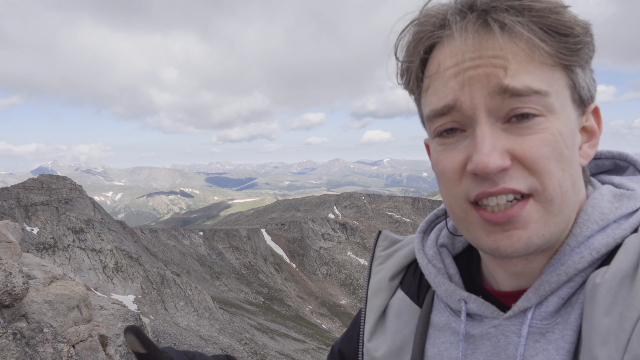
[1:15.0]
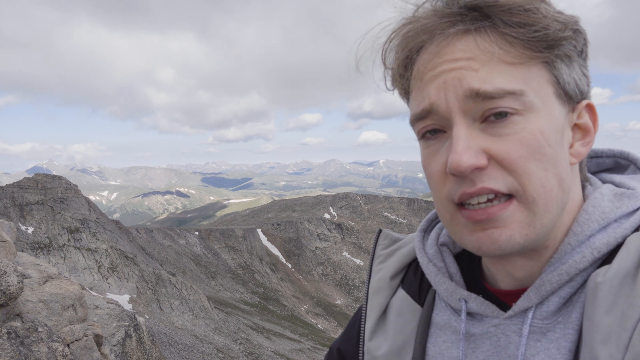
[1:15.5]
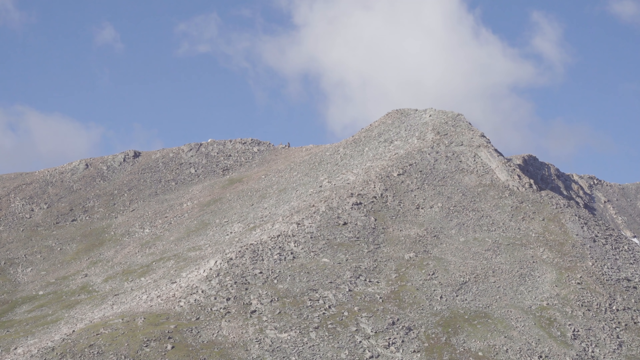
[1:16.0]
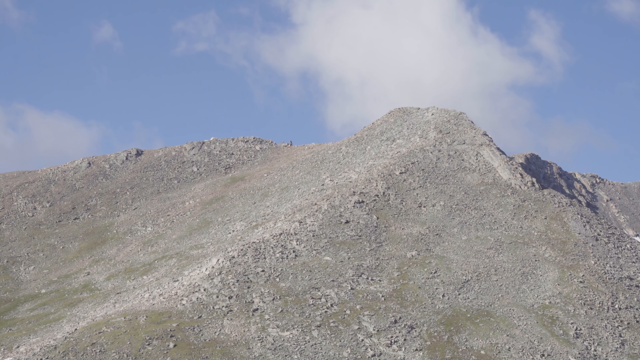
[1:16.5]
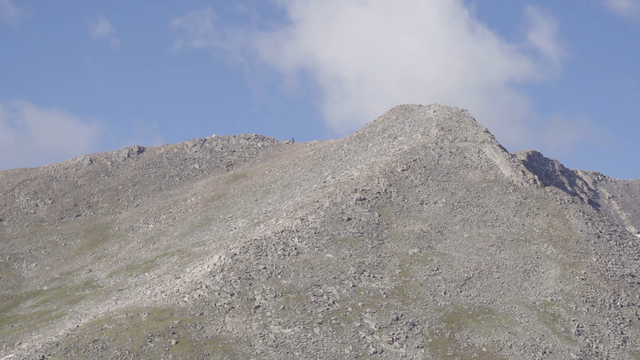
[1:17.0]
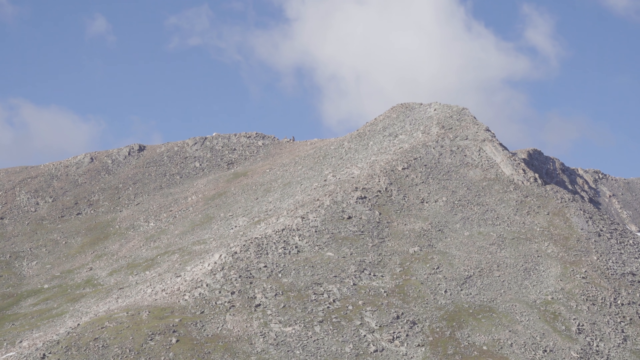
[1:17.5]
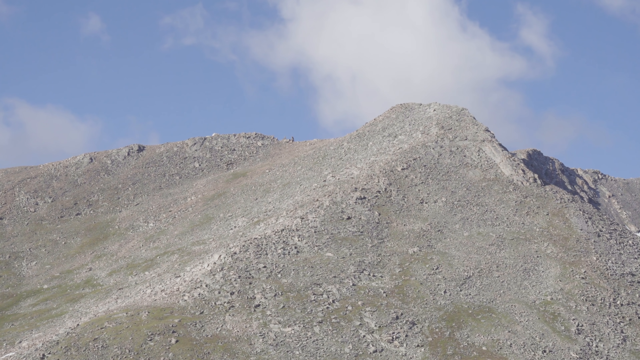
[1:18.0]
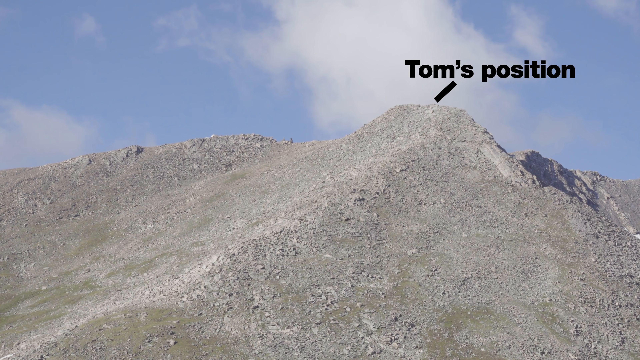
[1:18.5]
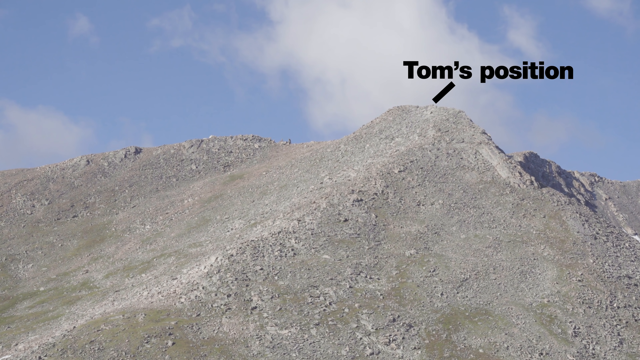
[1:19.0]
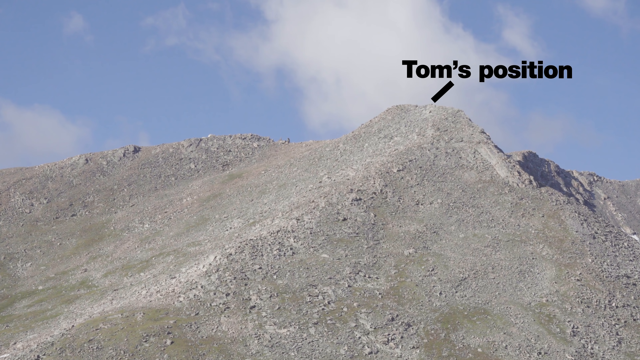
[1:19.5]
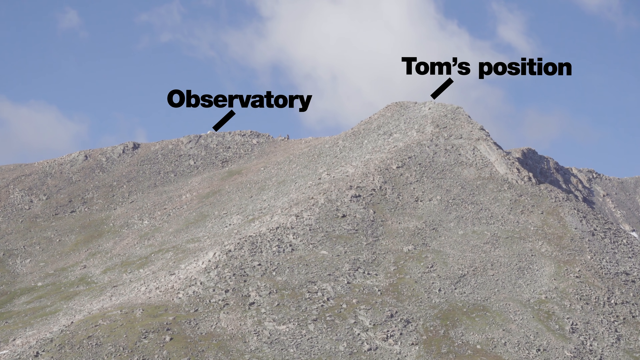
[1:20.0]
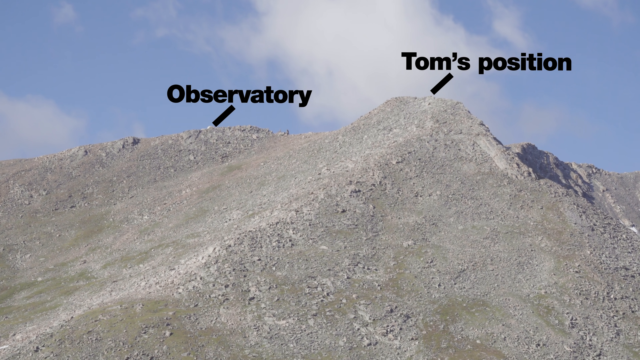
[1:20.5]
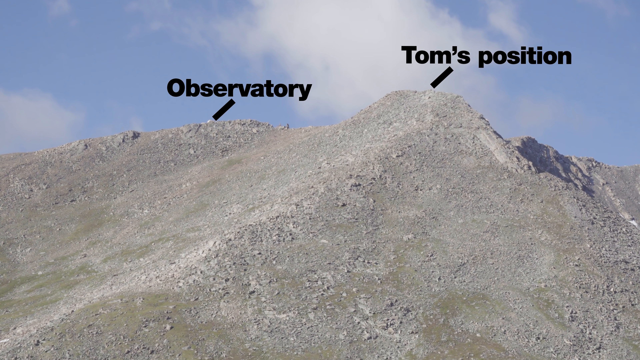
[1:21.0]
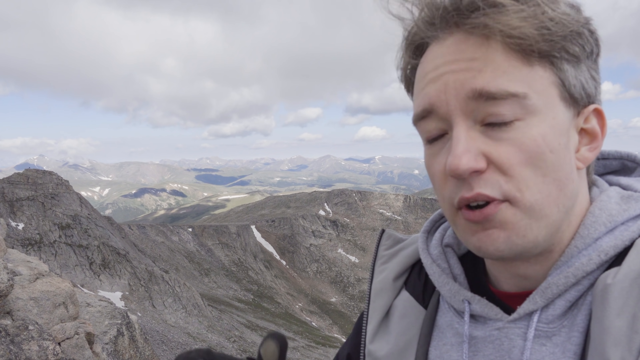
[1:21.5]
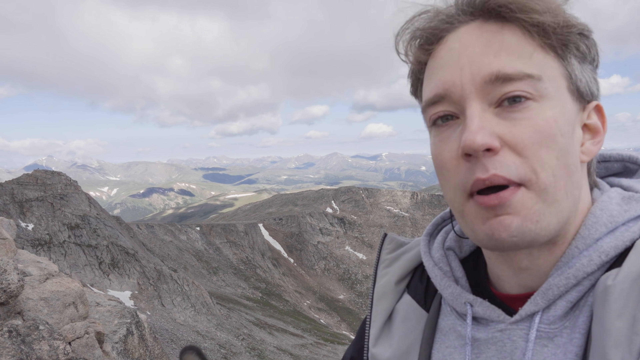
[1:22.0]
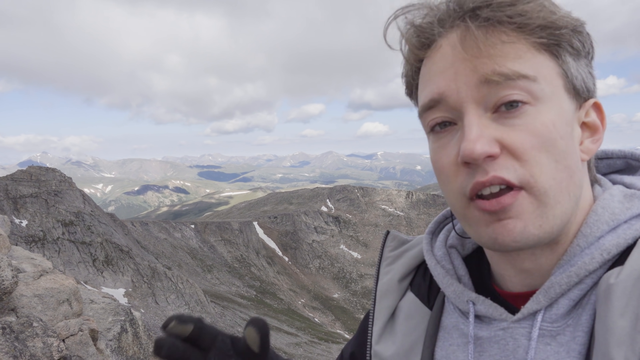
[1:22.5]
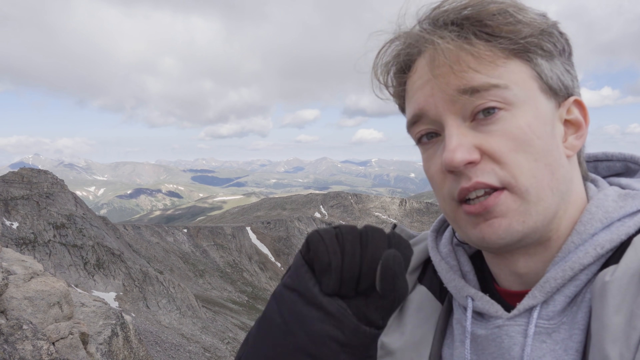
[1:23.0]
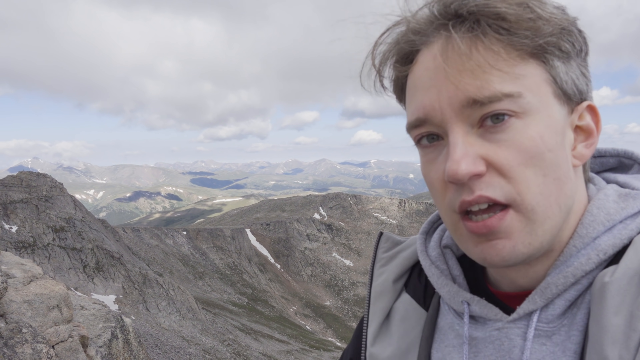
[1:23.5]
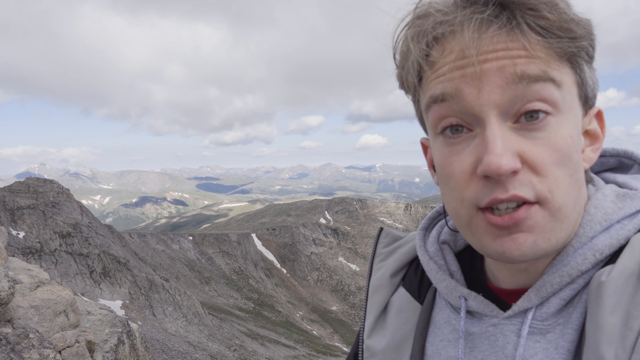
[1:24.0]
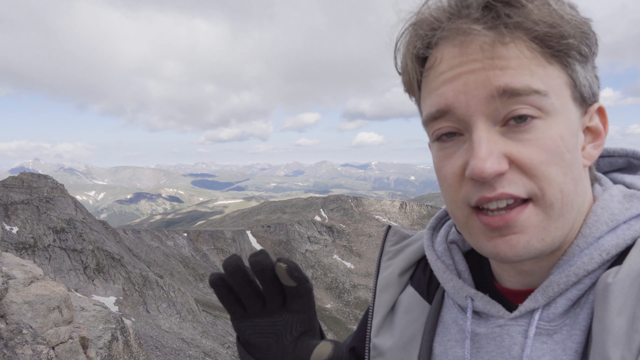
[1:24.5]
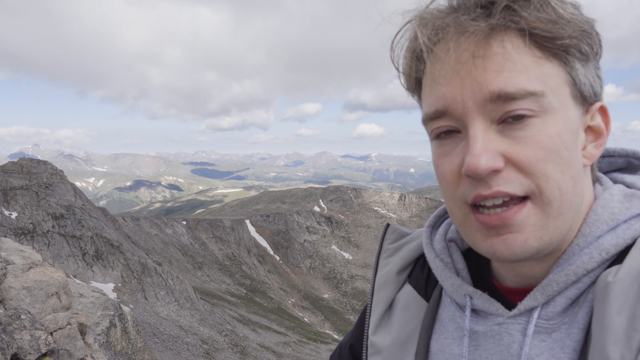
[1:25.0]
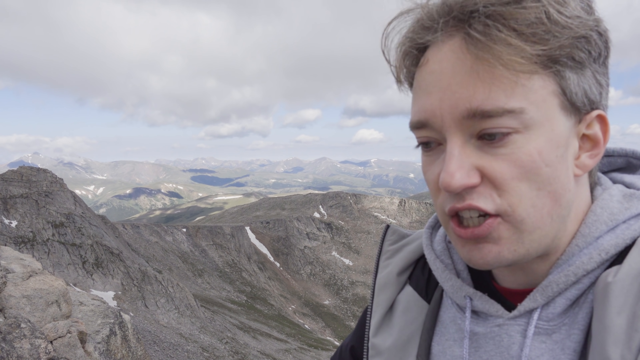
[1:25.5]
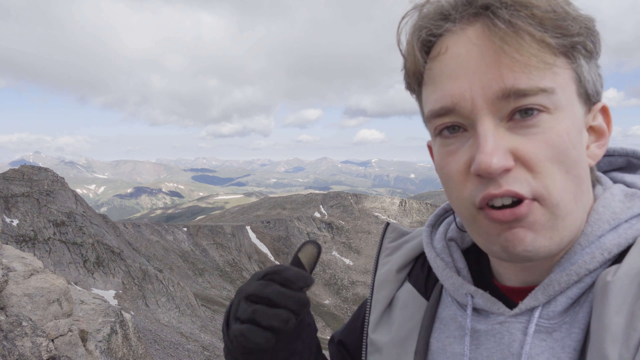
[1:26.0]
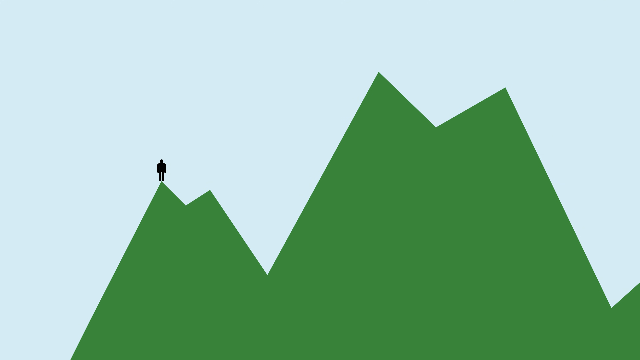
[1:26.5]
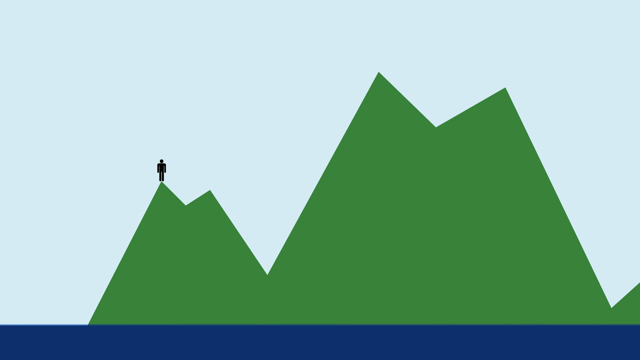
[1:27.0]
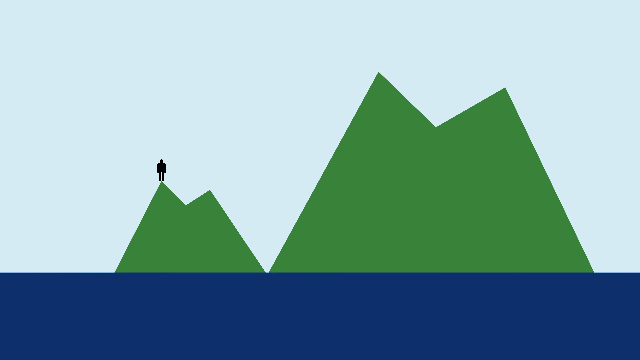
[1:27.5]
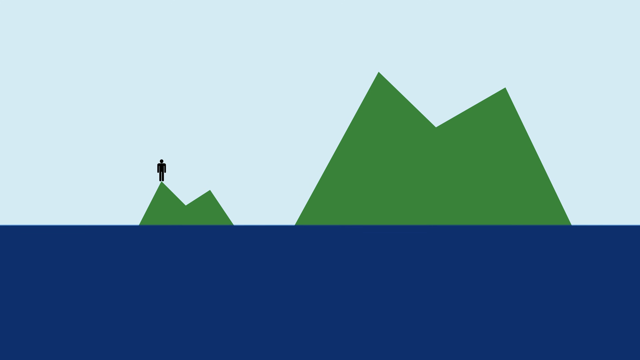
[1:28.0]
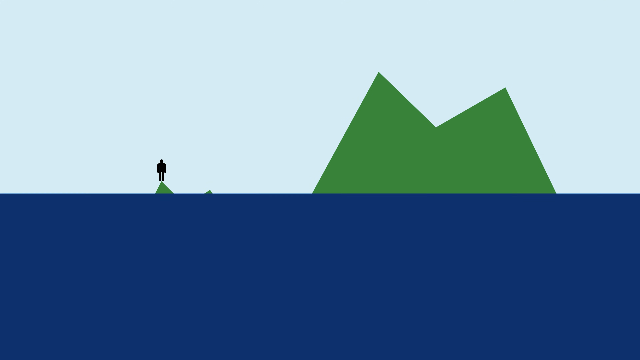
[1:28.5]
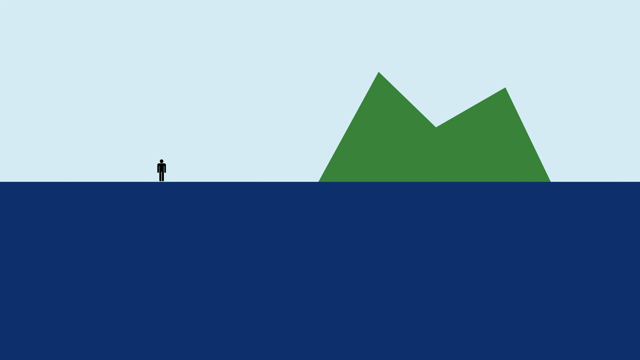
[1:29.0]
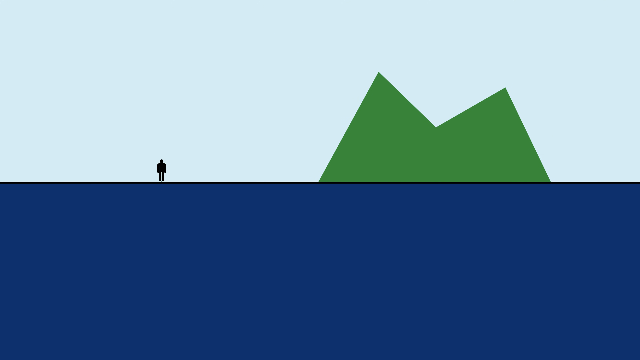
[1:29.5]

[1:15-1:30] The man is still speaking into the camera. The shot cuts to the steep gray mountain, where black text with lines marks Tom's position, Tom apparently being the man speaking to the camera, and, at a distance from him, where the "Observatory" is on the mountain. The graph from earlier appears, a green mountain drawing showing where Tom is: not at the peak but halfway to the top. A blue portion rises to the middle, just below where he is shown on the graph.